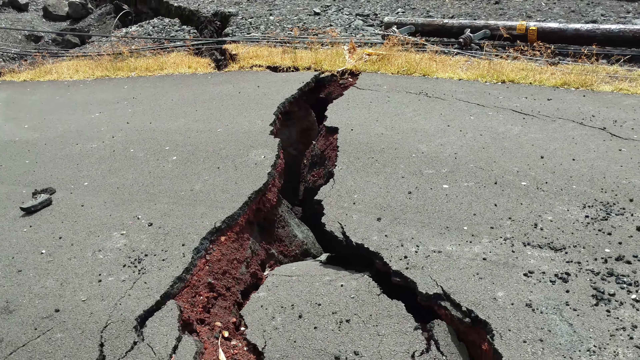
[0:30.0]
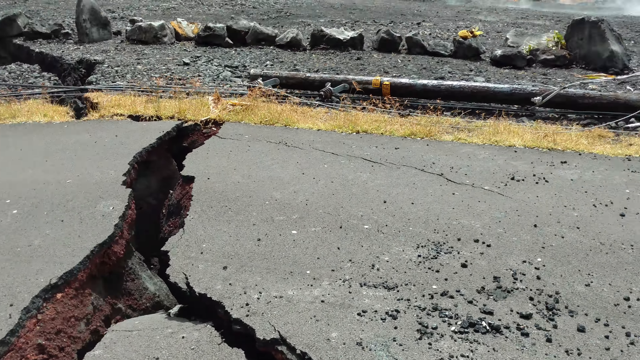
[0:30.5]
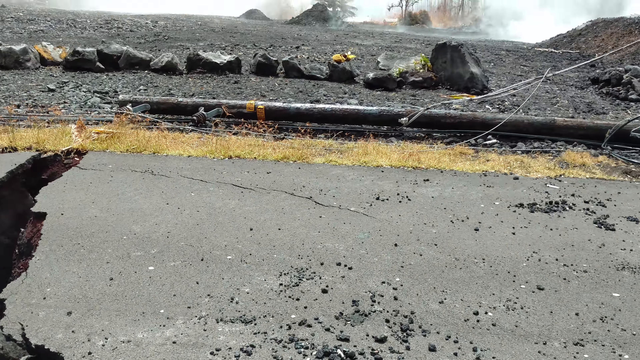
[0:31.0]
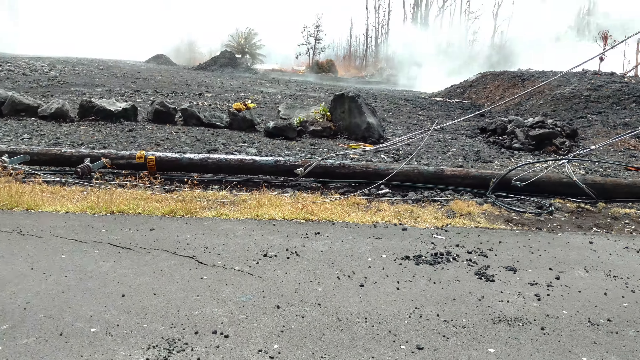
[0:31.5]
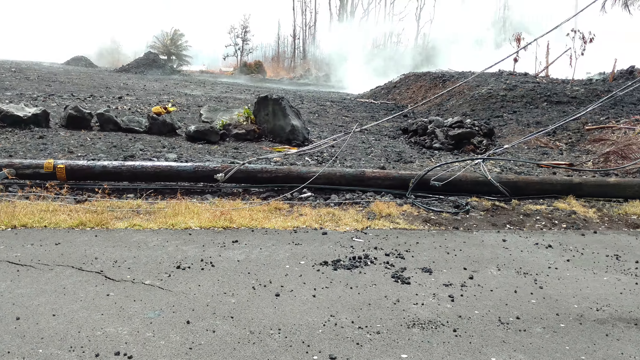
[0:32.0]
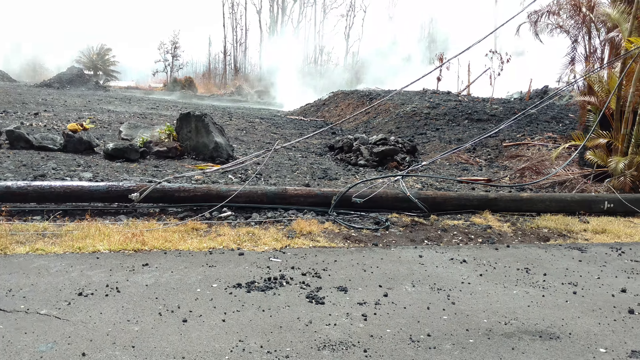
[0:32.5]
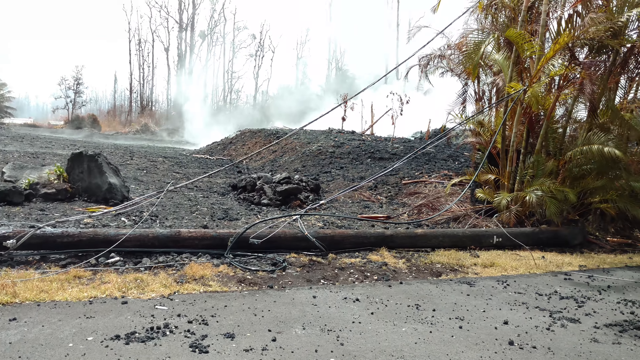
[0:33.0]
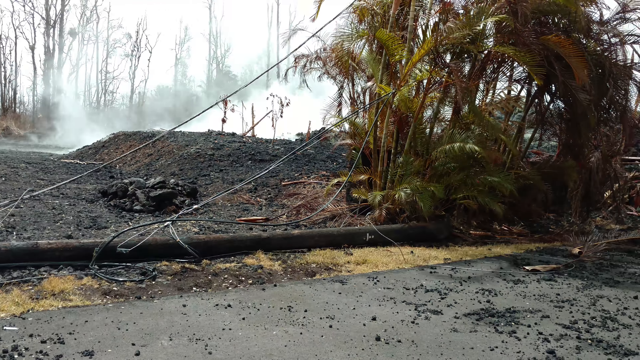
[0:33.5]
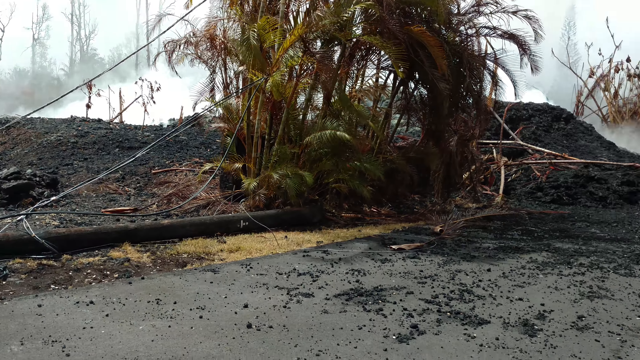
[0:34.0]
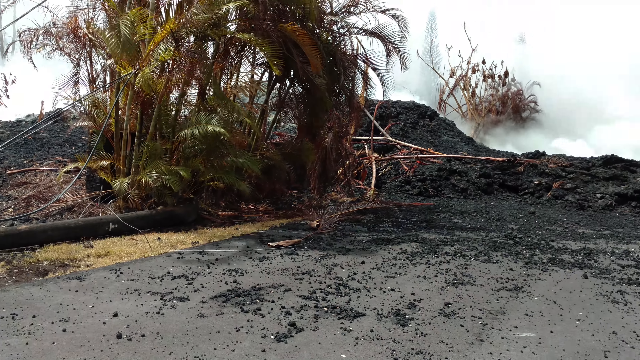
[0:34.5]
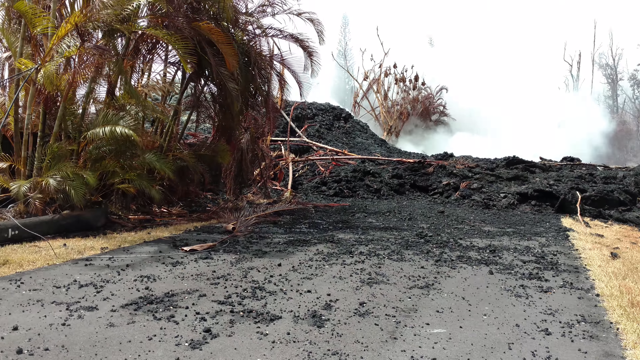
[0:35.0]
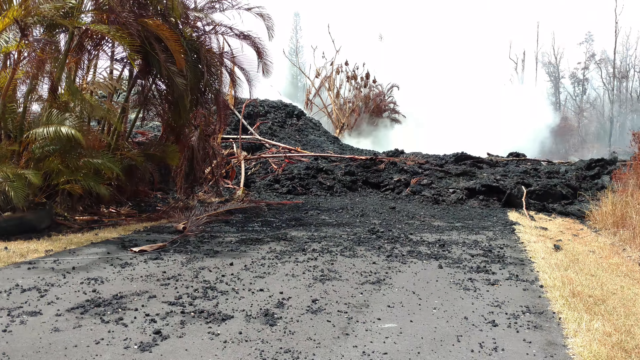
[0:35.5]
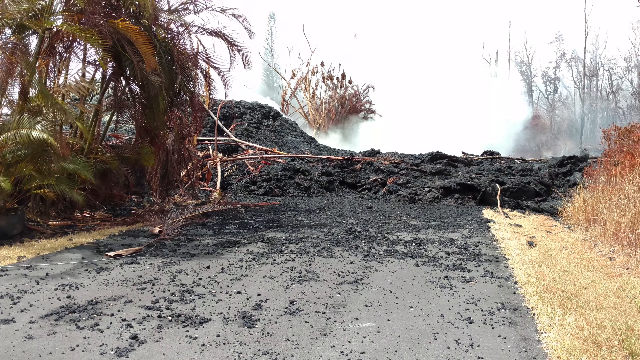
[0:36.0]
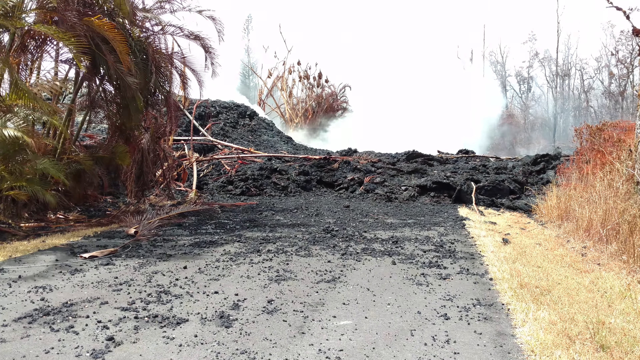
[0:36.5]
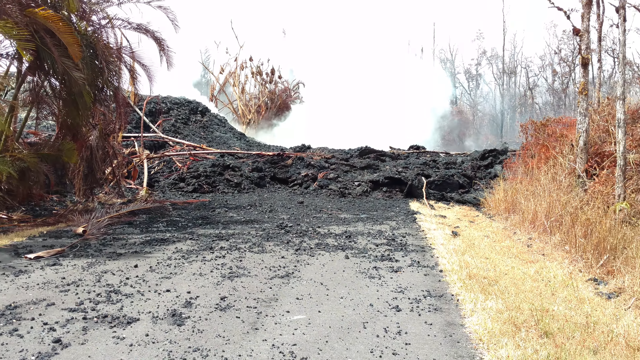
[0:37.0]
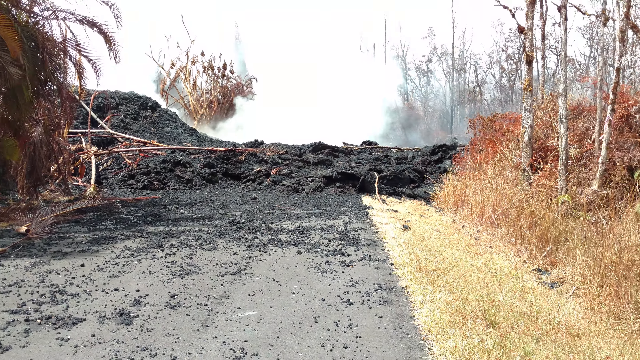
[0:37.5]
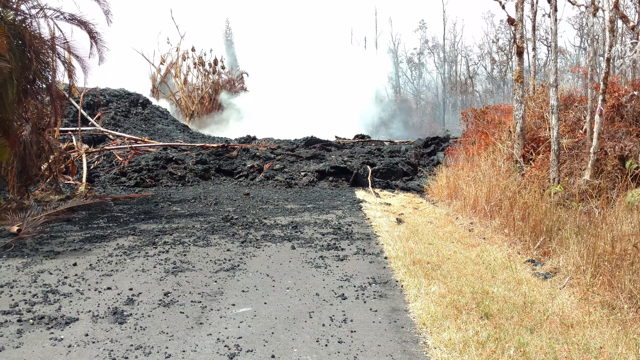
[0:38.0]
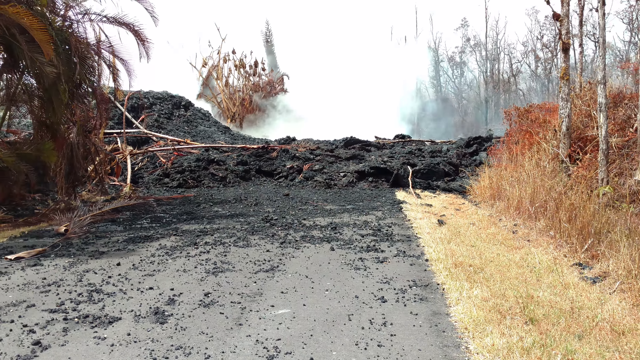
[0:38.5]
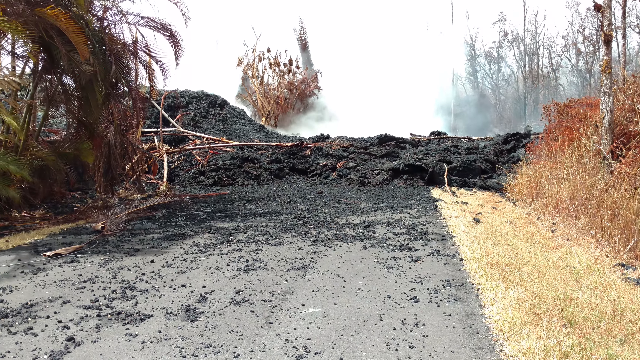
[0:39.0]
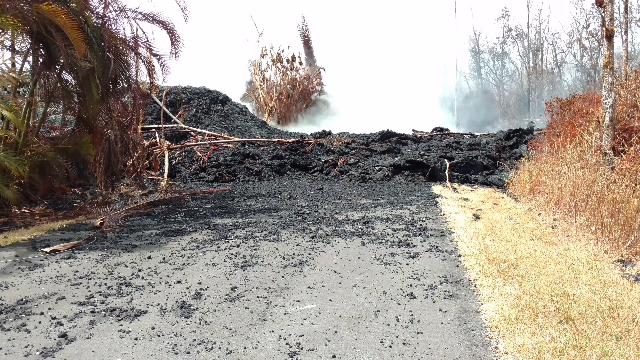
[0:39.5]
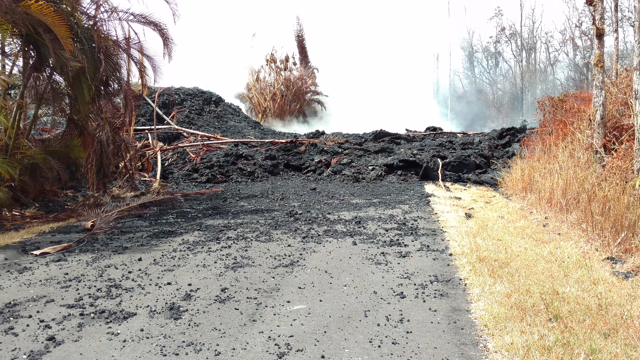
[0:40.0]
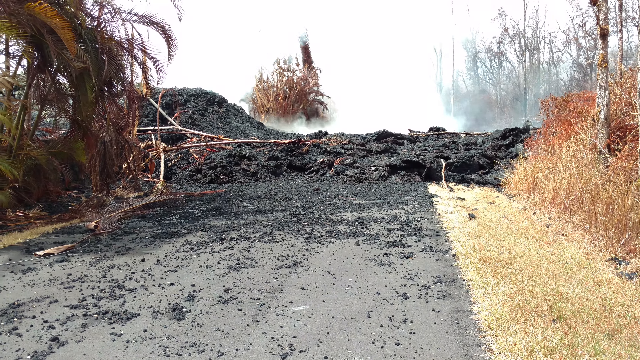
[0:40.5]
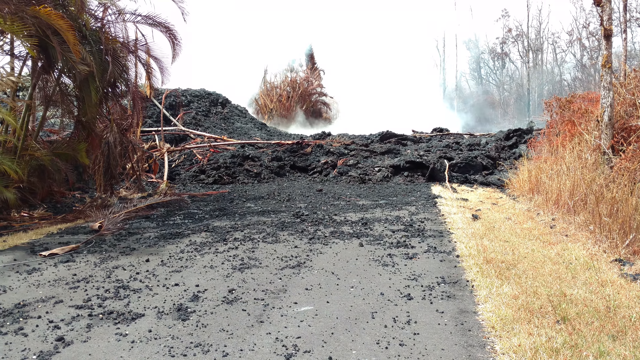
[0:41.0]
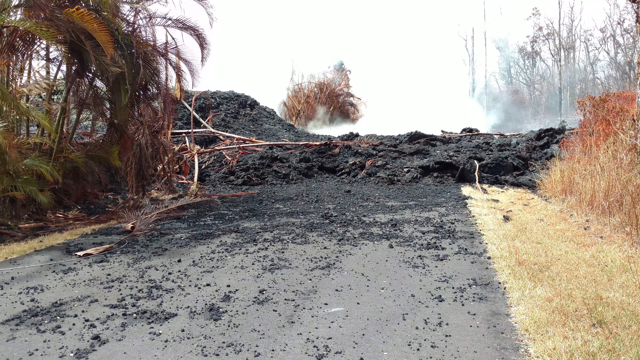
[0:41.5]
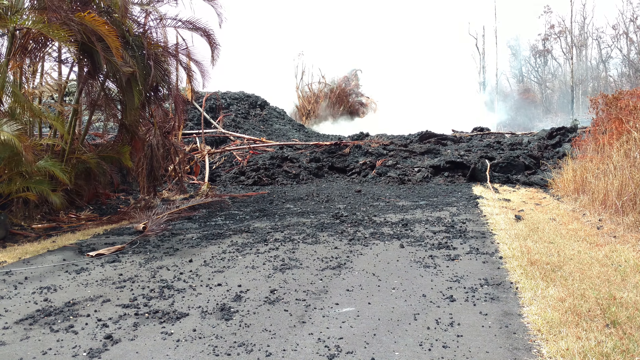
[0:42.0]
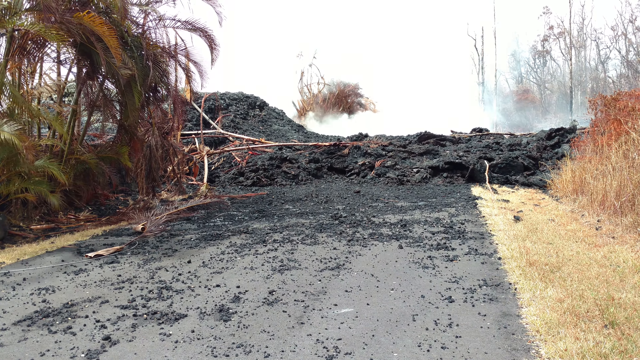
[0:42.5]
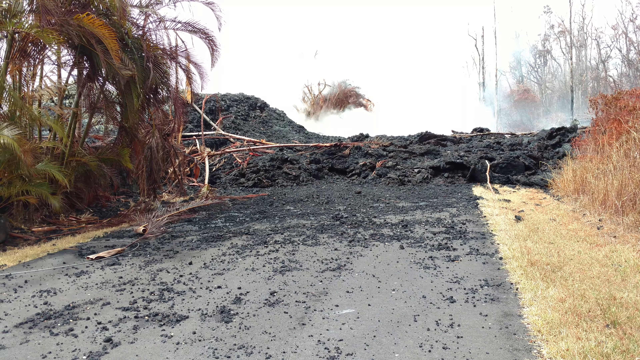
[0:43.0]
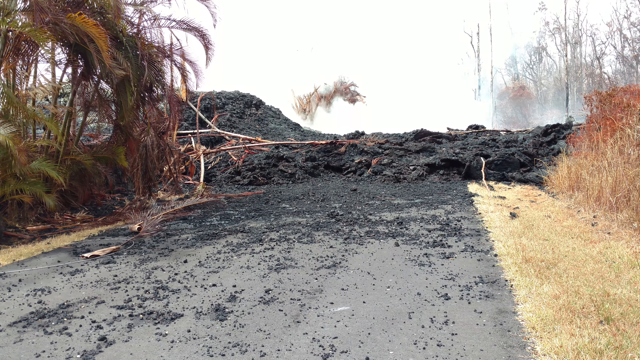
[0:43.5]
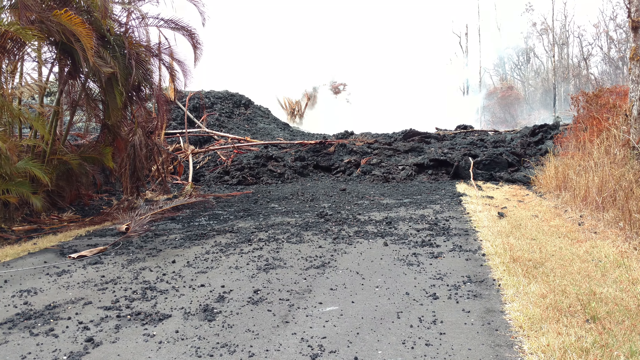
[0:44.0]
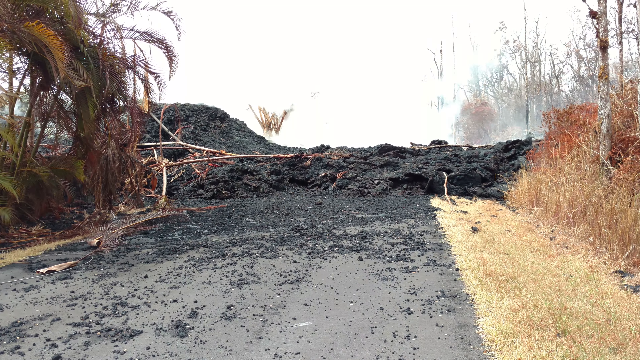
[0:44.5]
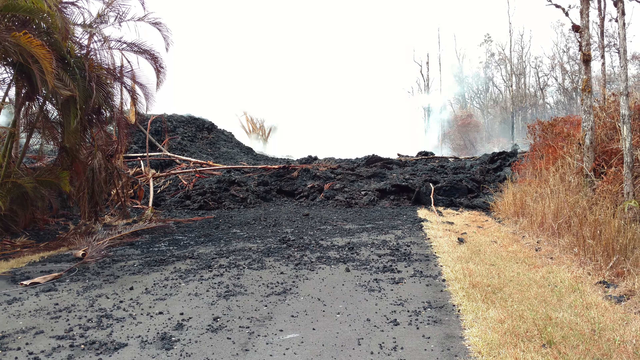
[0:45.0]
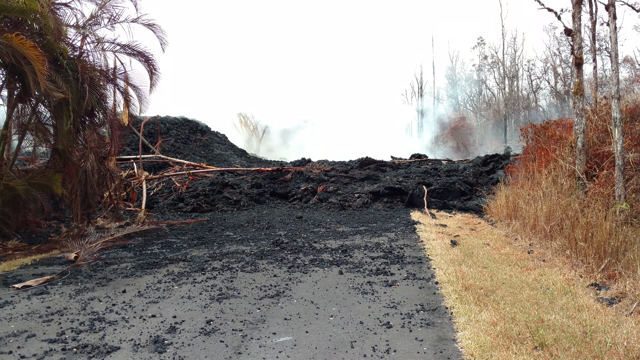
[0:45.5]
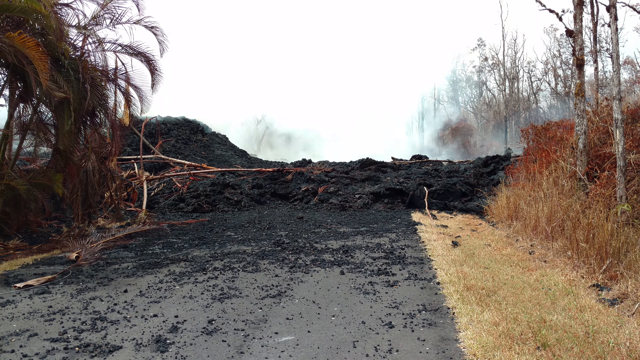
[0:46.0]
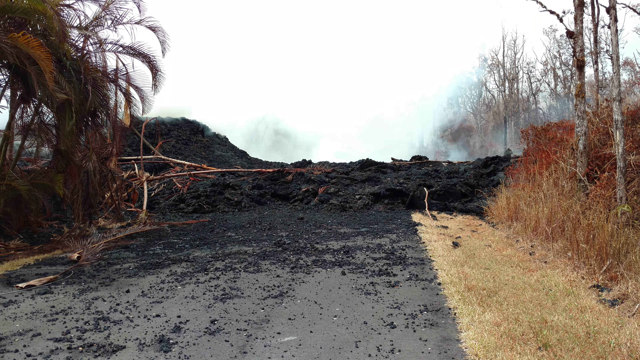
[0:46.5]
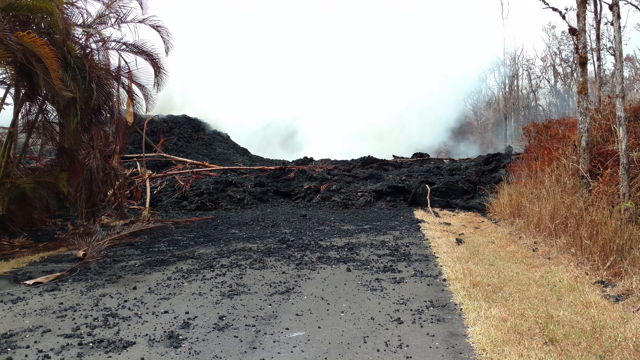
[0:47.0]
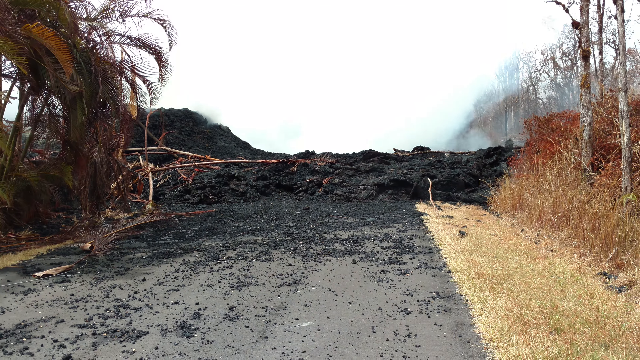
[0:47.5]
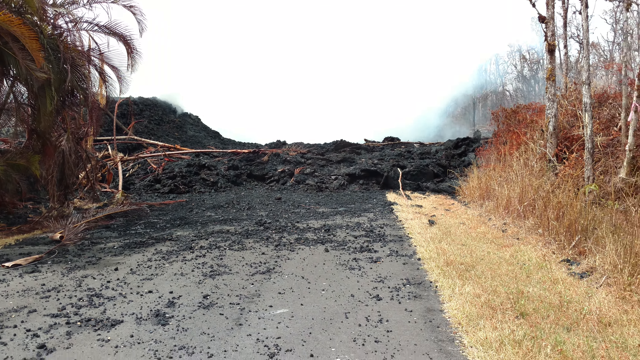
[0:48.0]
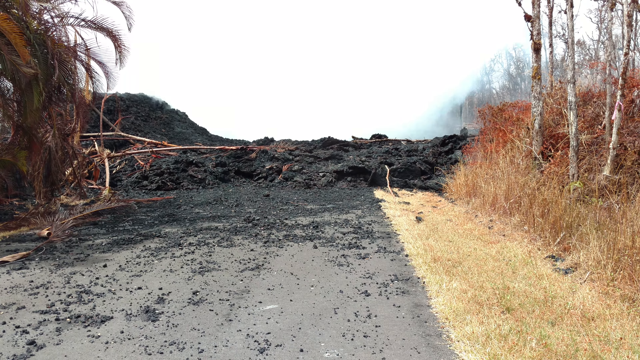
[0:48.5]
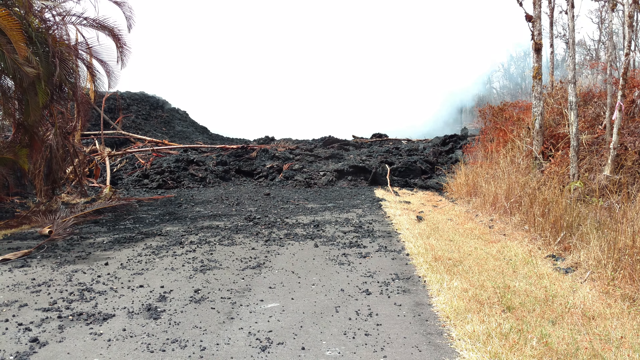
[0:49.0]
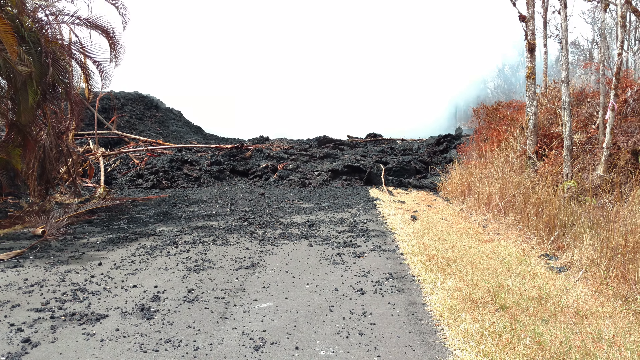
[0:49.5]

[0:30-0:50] The camera stays on the ground for a few more seconds, then moves toward the right, showing burnt material all around. The haze is smoke rather than mist, as everything around is burnt, all black and looking like coal. The camera continues to the right across the burnt areas. A palm tree on the left is not burnt much, but the area in front of the palm tree is badly burnt; everything there is black, and smoke is still flowing from the ground. The right-hand side of the screen is not burnt much, but its colour shows the grass there is very dry.